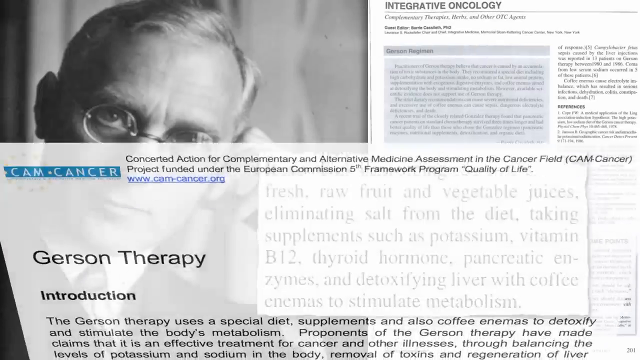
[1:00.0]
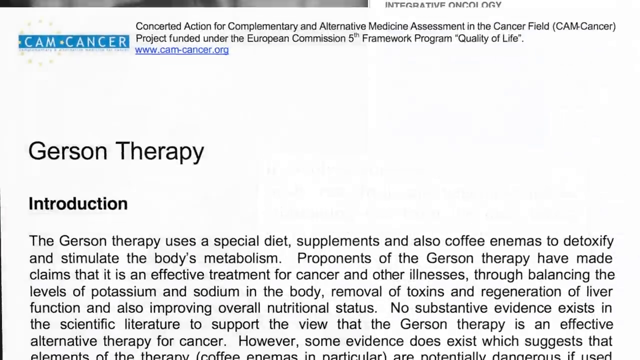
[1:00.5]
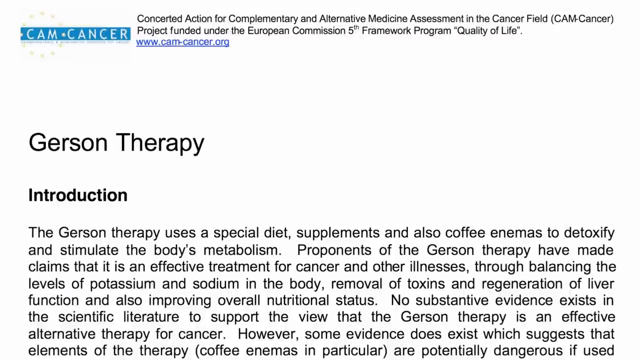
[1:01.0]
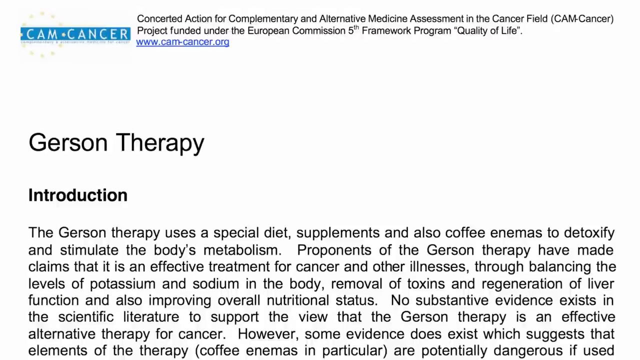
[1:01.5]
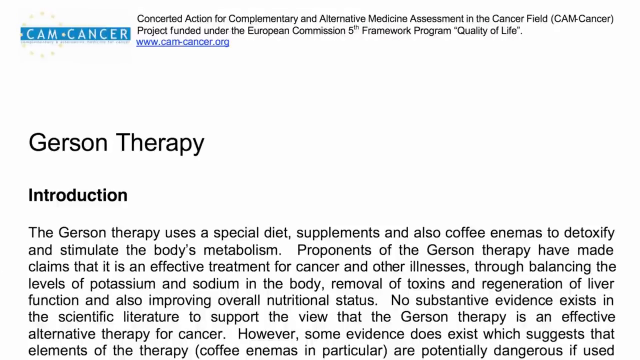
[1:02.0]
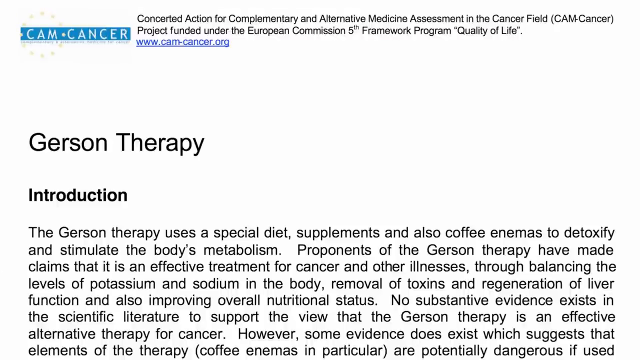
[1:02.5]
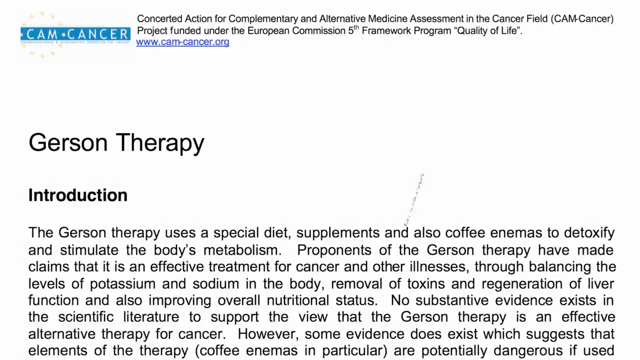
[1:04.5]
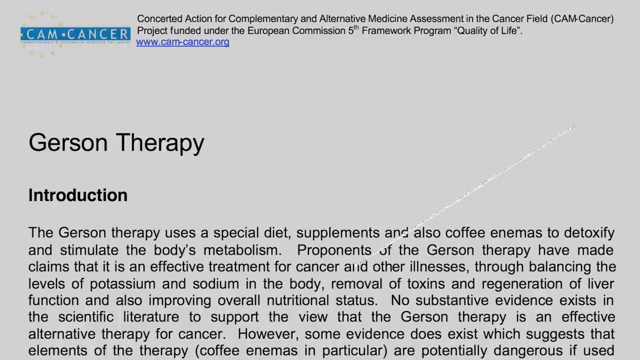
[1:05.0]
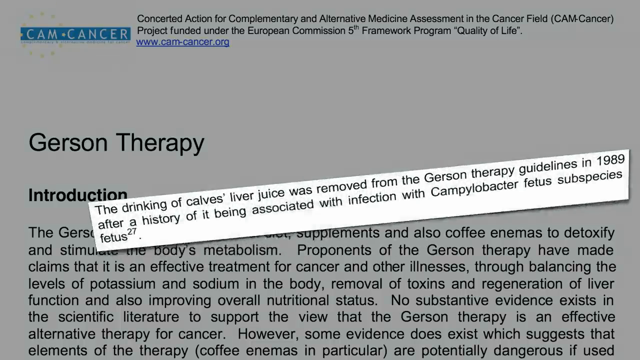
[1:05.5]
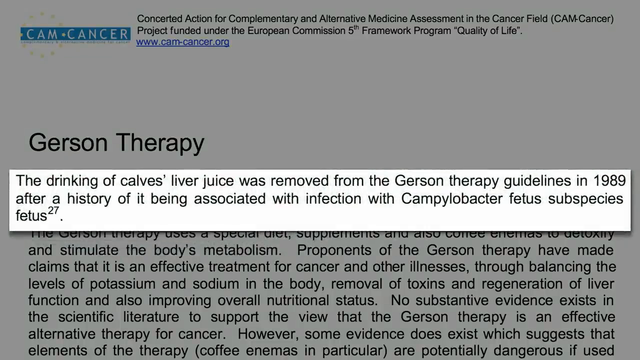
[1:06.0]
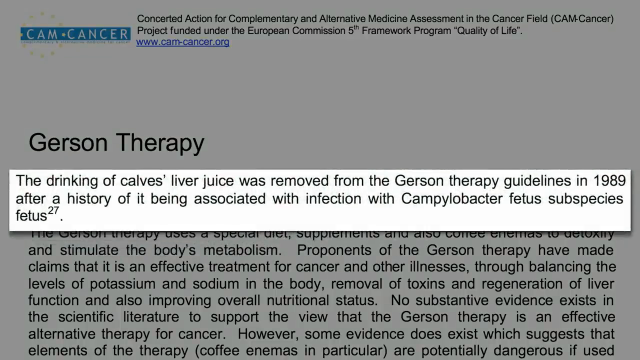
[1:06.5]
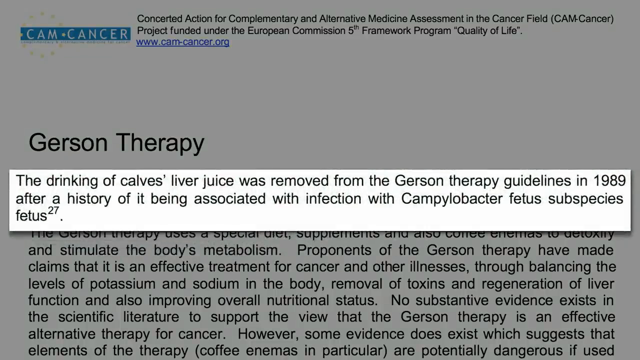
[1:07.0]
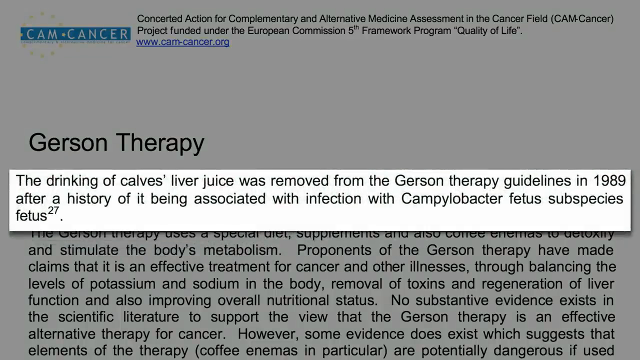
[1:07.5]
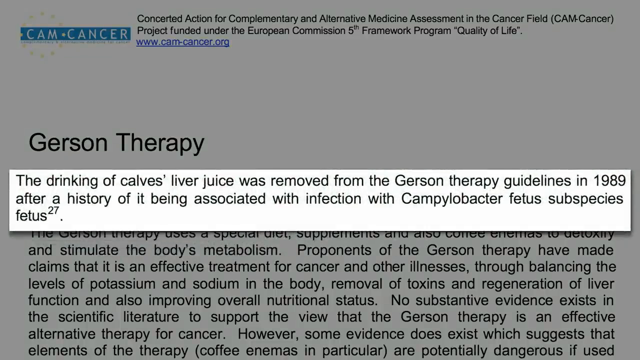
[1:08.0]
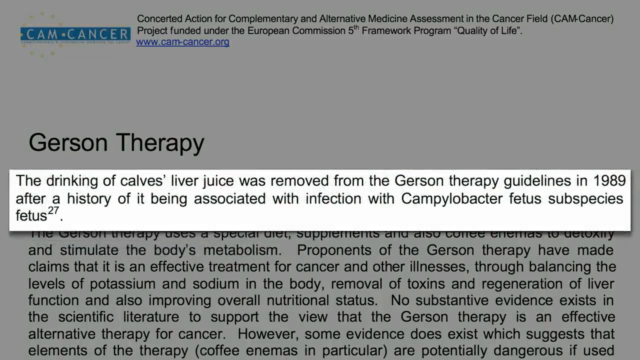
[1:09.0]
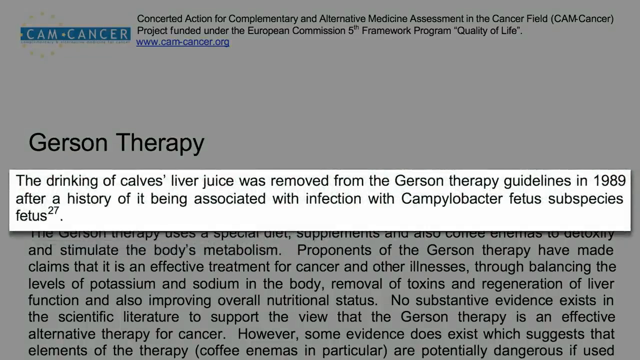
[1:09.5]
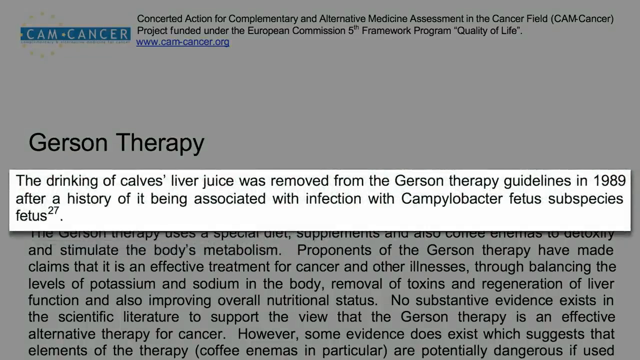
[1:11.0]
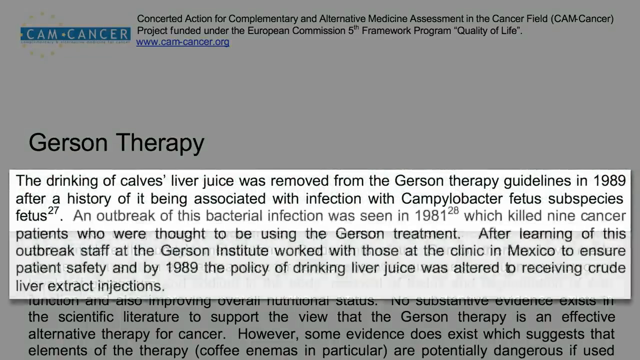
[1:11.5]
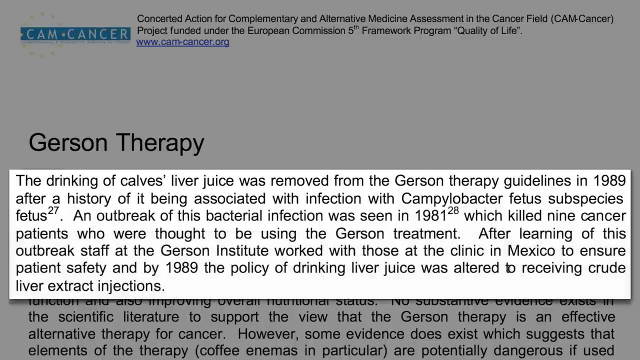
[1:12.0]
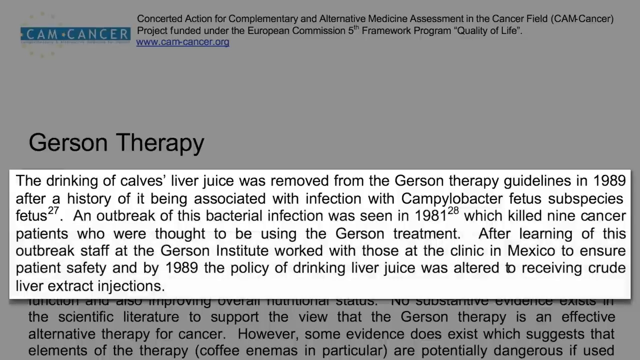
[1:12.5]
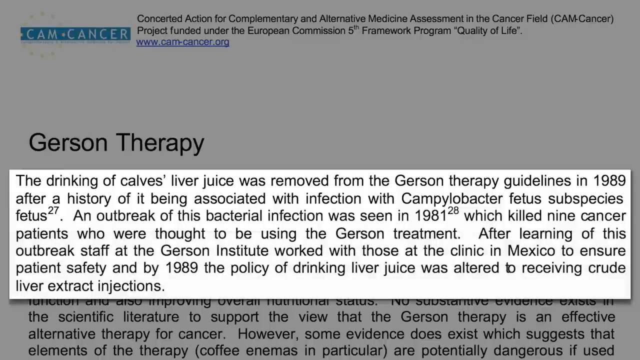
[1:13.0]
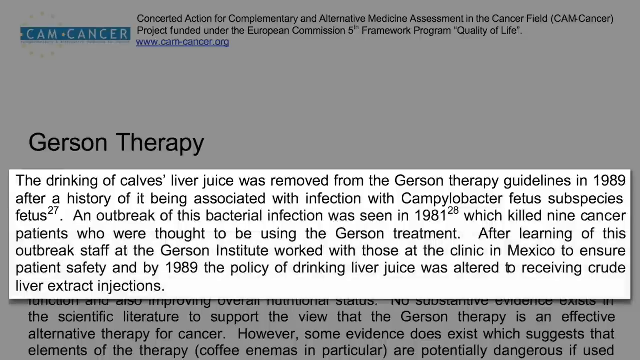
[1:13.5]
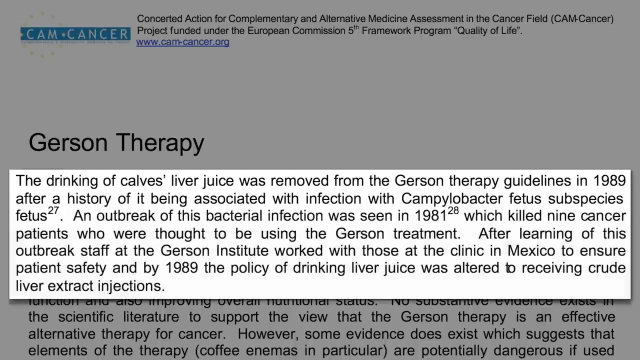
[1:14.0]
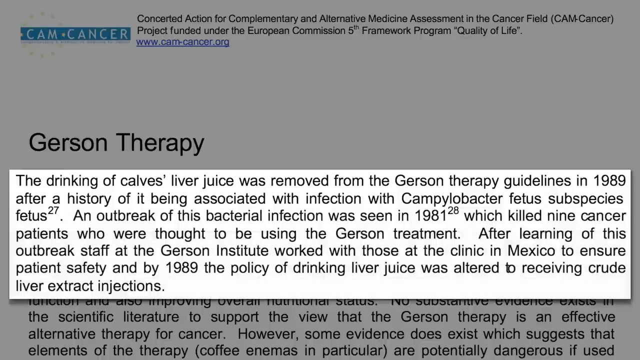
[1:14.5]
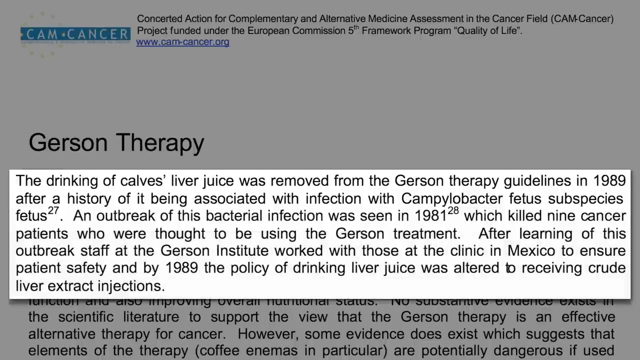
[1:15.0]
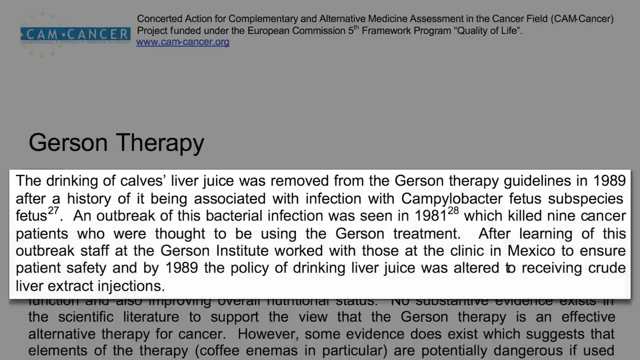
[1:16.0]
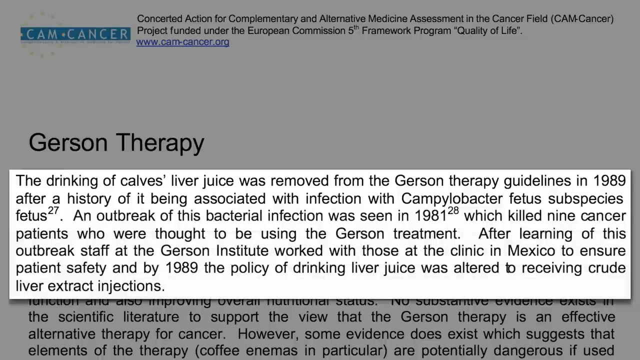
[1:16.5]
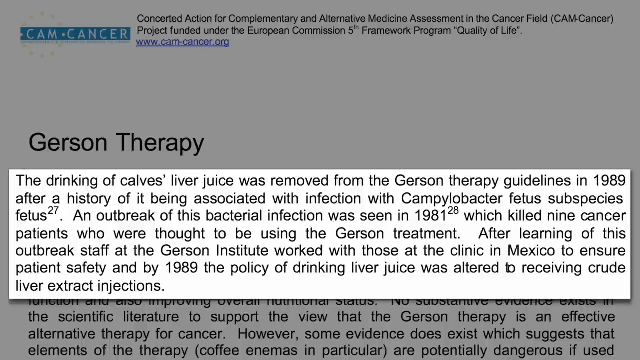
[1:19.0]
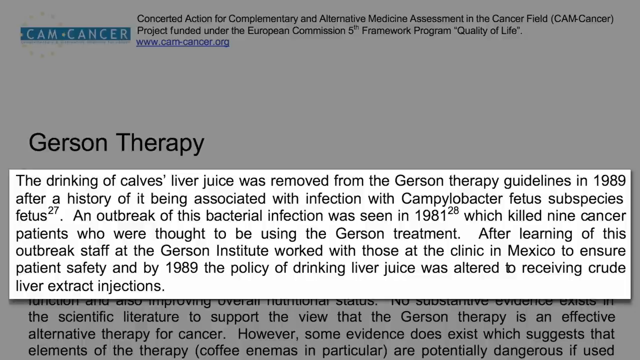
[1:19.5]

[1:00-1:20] What looks like a news article appears, with a blue elongated rectangle at the top reading "CAM cancer" in white letters. Below that it says "garrison therapy," and below that "introduction," followed by text beginning "the garrison therapy uses a special diet supplements." A piece of the article then flies up and enlarges in the center of the screen, reading "the drinking of calves liver juice was removed from the garrison therapy guidelines in 1989 after a history of it being associated with infection." Another piece of the article appears, repeating that text and continuing: "an outbreak of this bacterial infection was seen in 1981, which killed nine cancer patients who were thought to be using the garrison treatment. After learning of this outbreak, staff at the Garrison Institute worked with those at the clinic in Mexico to ensure patient safety. And by 1989, the policy of drinking liver juice was altered to receiving crude liver extract injections."